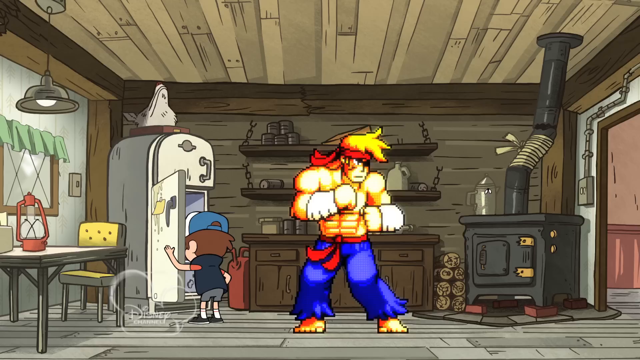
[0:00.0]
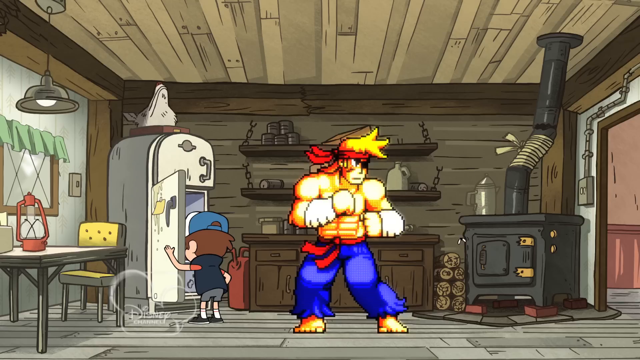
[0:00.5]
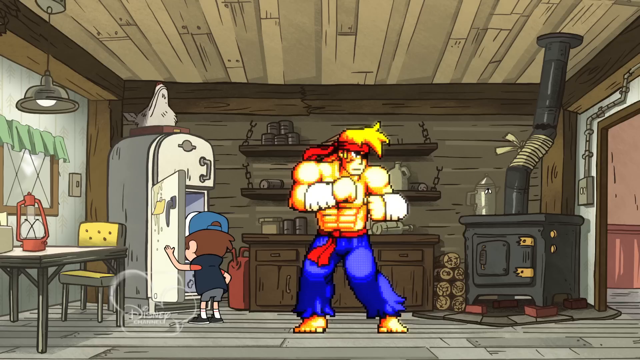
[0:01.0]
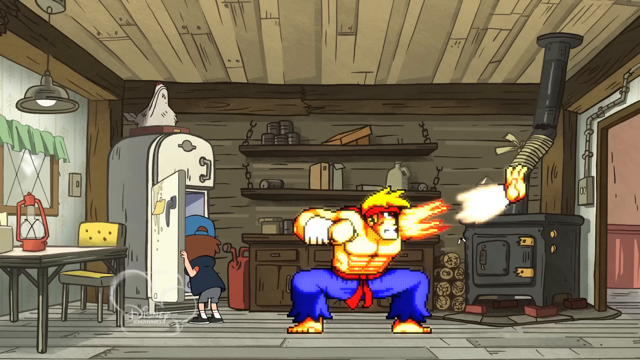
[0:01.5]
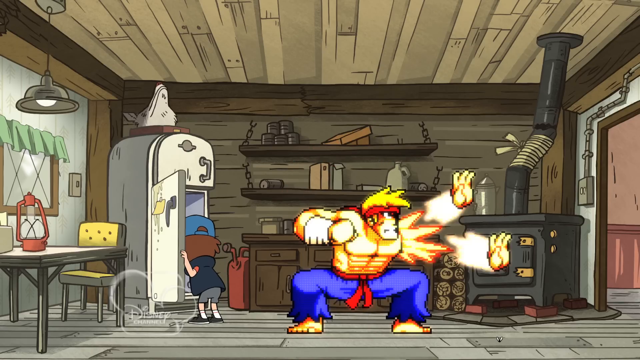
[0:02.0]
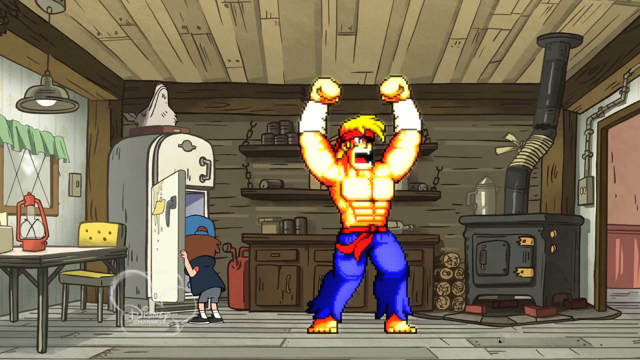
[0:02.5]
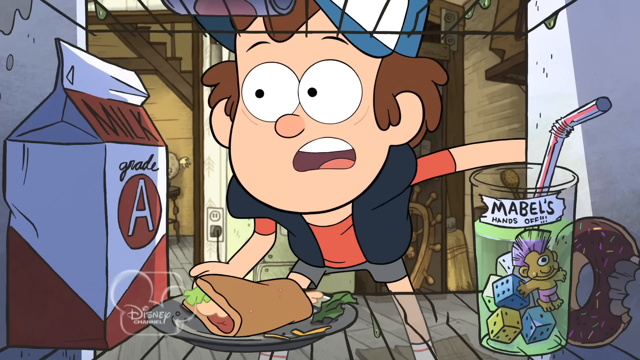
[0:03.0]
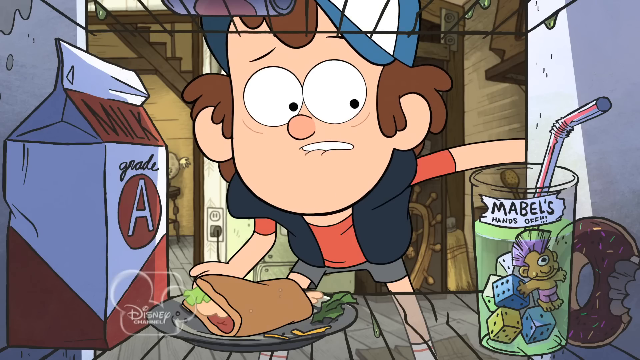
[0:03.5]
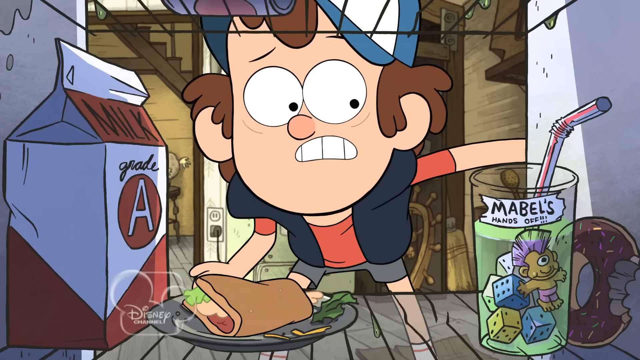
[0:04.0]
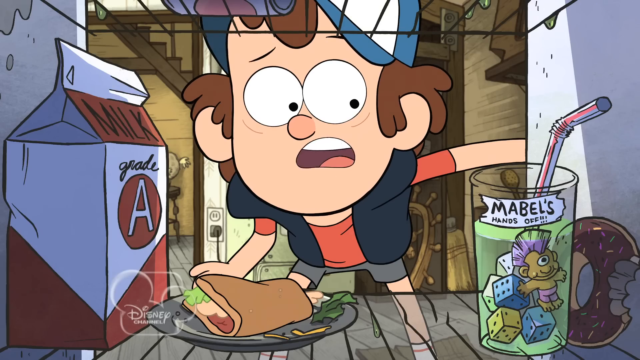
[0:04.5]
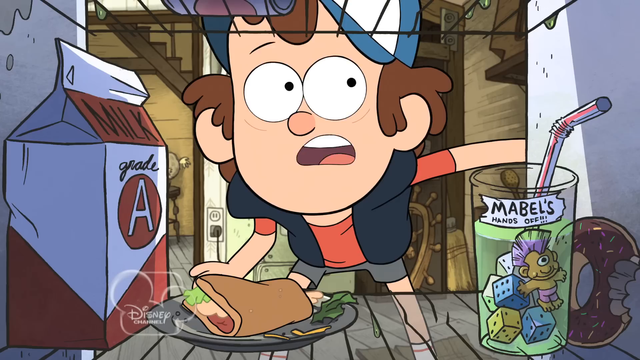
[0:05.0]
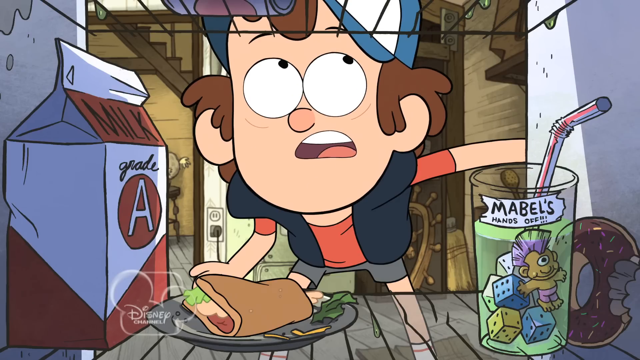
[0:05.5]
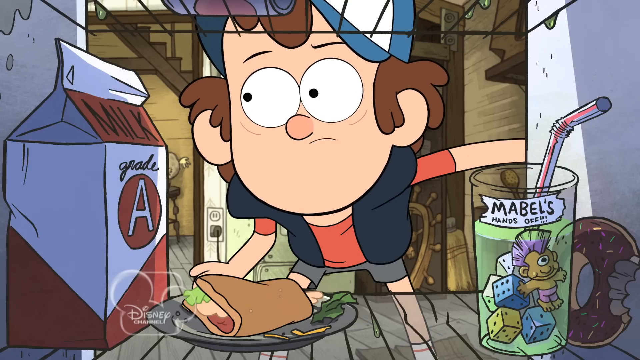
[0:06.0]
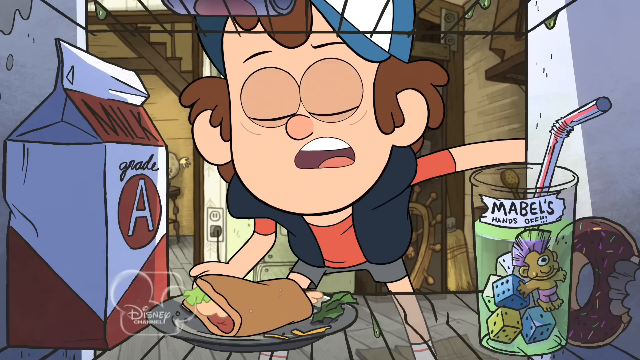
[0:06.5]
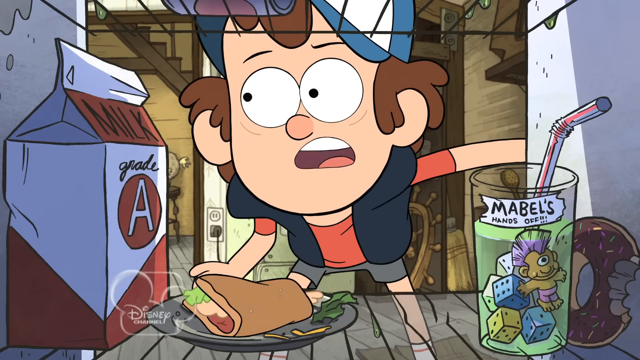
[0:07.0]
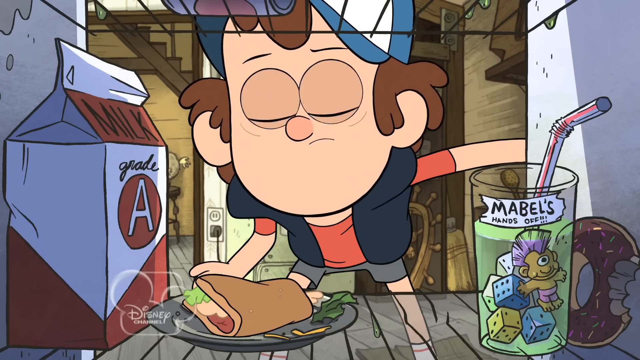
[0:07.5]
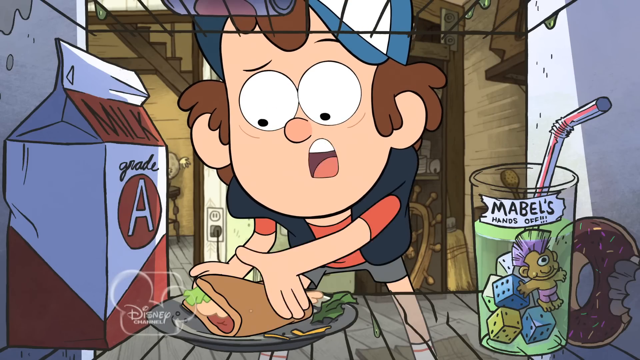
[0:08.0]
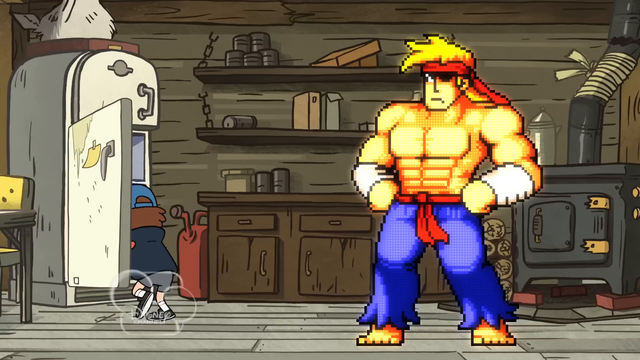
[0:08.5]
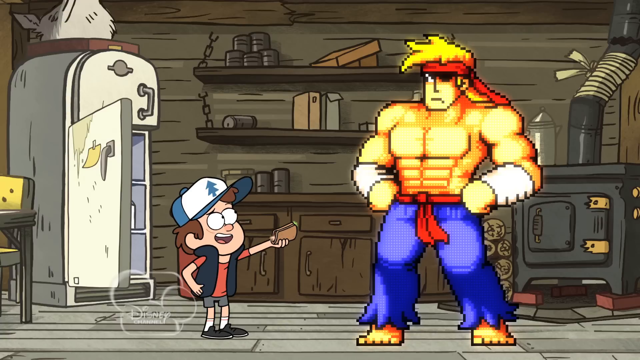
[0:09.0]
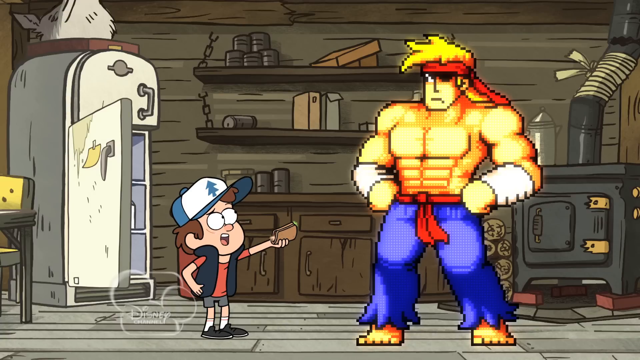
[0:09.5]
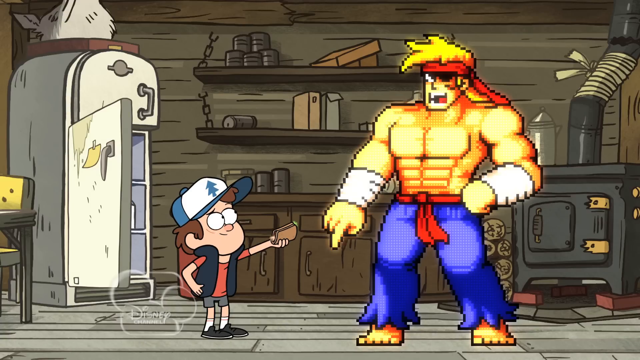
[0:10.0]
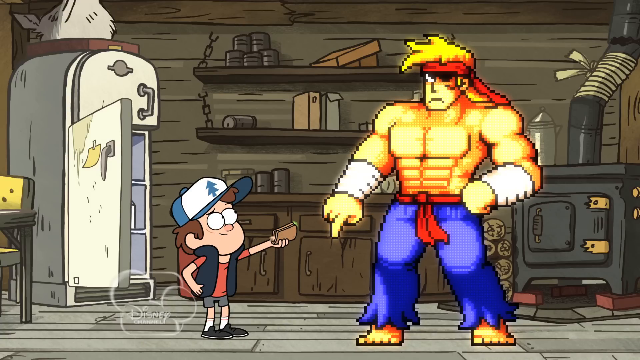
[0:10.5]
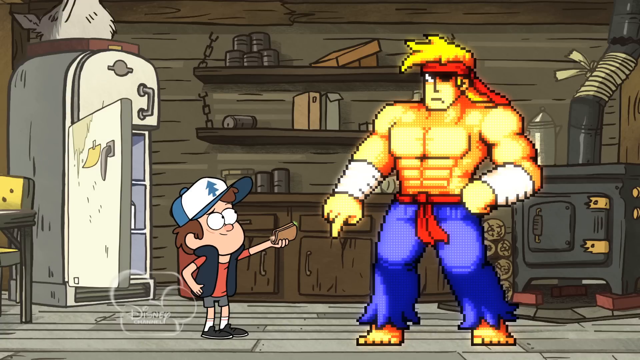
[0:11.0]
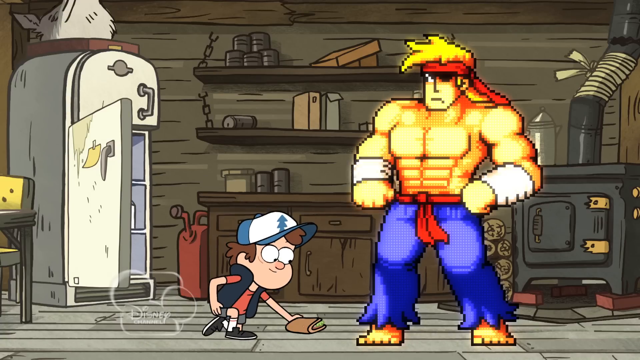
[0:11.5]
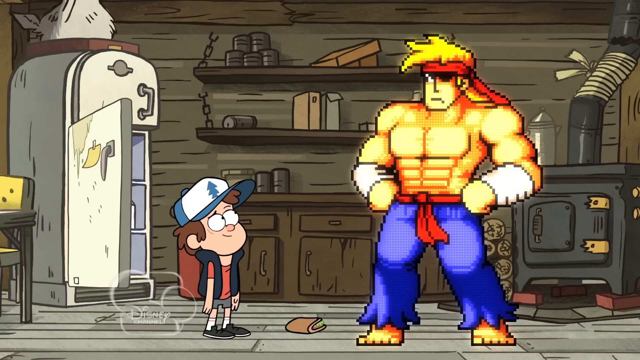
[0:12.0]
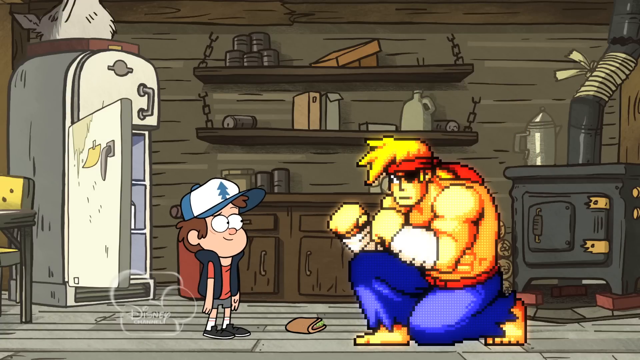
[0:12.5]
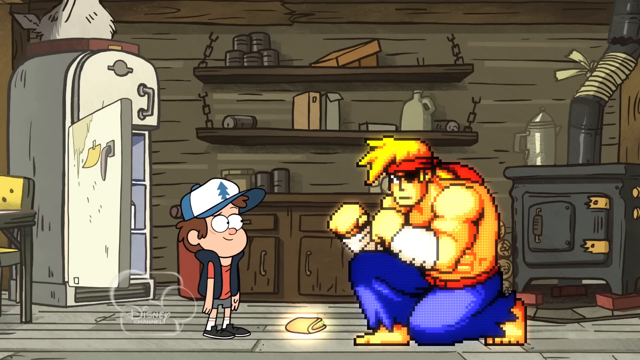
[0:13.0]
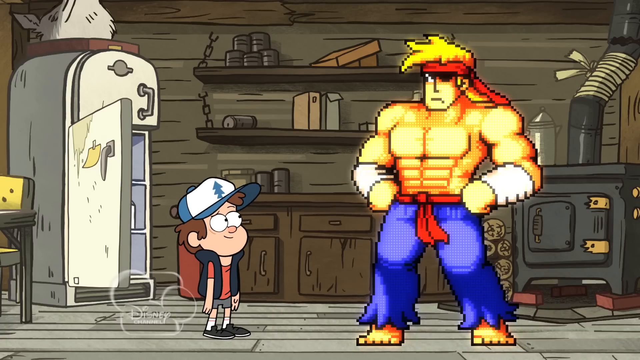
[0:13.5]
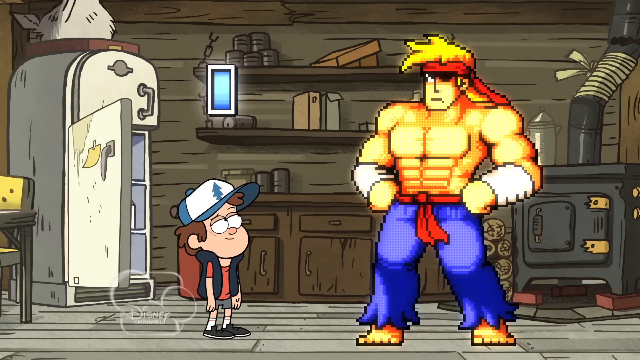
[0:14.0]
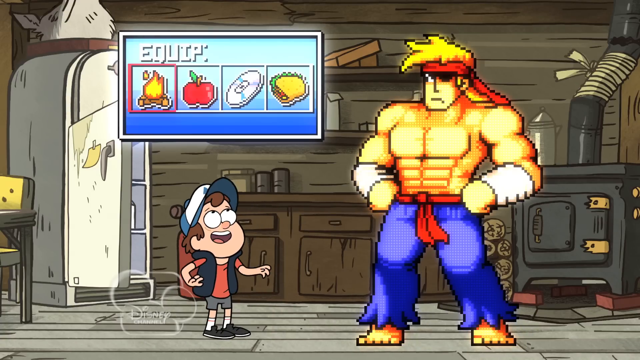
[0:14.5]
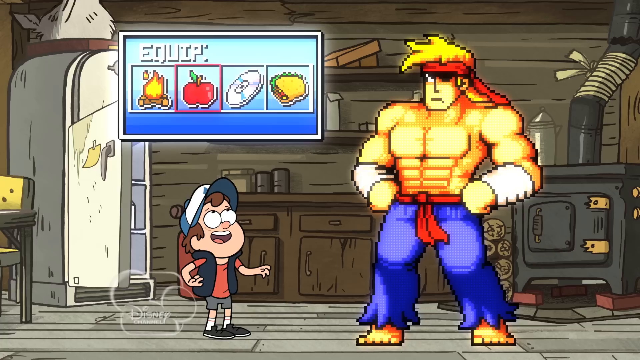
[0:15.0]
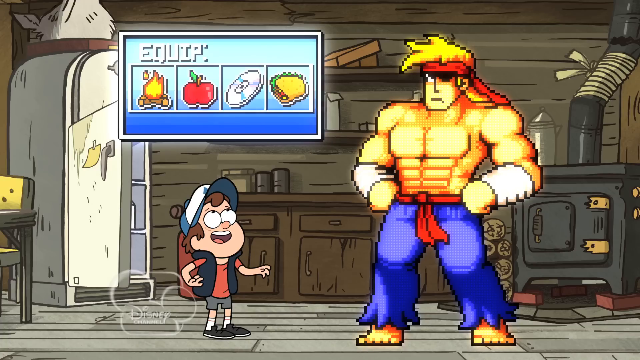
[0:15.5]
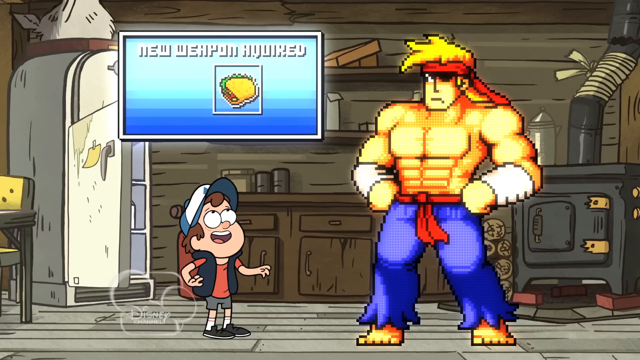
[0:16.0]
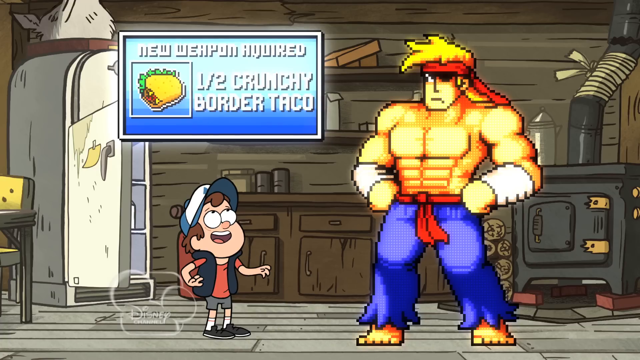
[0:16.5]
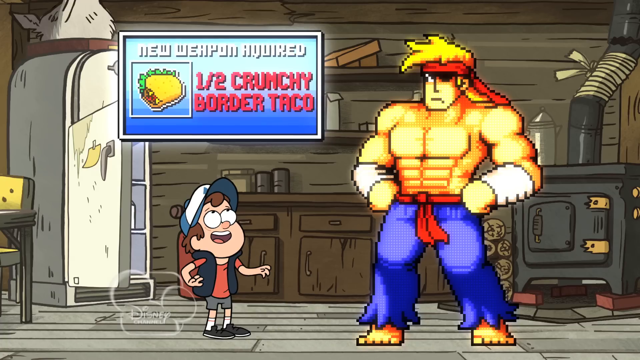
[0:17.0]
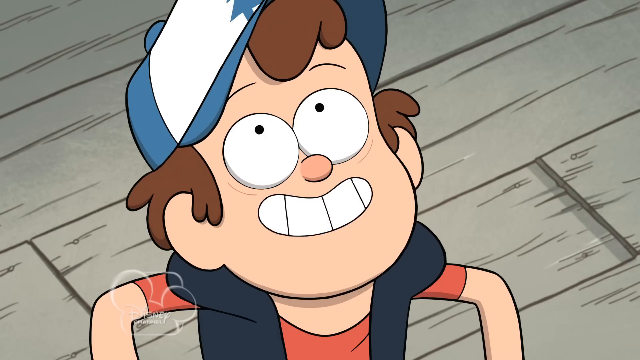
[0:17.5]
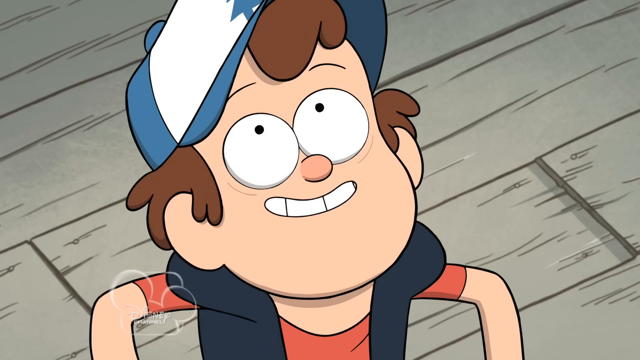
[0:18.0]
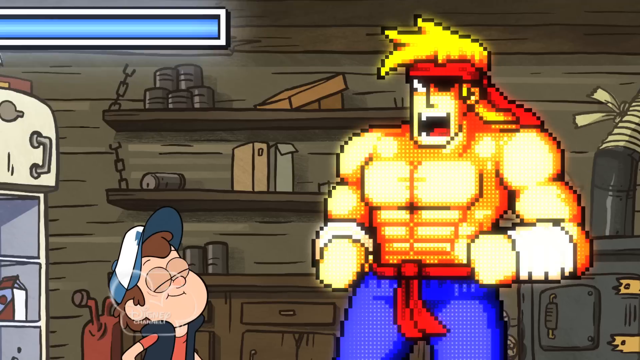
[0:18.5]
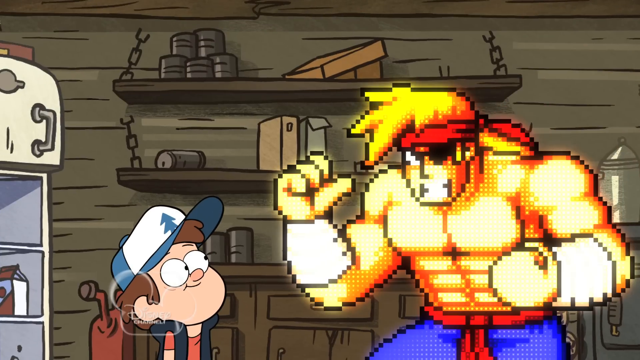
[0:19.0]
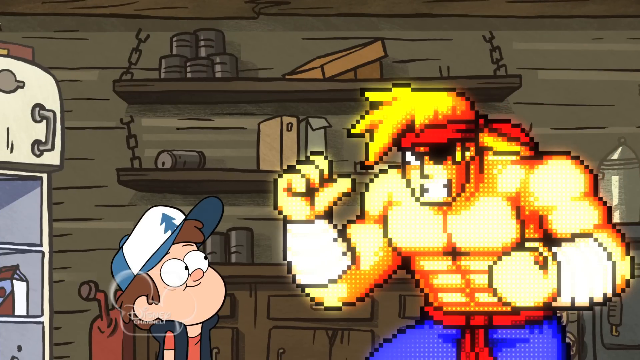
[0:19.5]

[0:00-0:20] In an animated video, a Street Fighter character inside a cabin boxes an iron stove. Another character reaches into the refrigerator, and his face is seen inside the refrigerator as he talks, looking at the milk, the sandwich, and a glass of green juice with a straw sticking out of it over in the corner. Still talking with his head in the refrigerator, he eventually picks up the sandwich and offers it to the Street Fighter character, who points to the ground to indicate it should be put there. The Street Fighter character then turns the sandwich into a digital screen, apparently making it part of the options he can choose from in his game. The cabin has a refrigerator, a large cast iron stove, and shelves behind the characters, with shelves mounted on the back wall. The walls and ceiling are all made of wood boards; the cabin does not look completely run down and looks like one that would be out in the deep woods. Beside the stove, a stack of wood is on the floor.